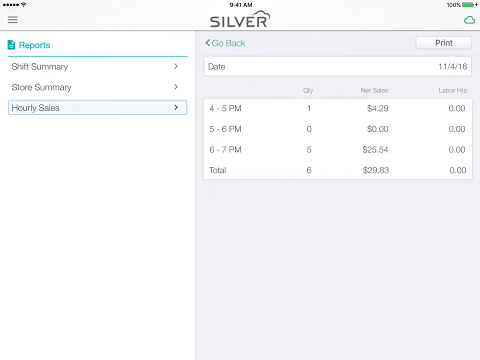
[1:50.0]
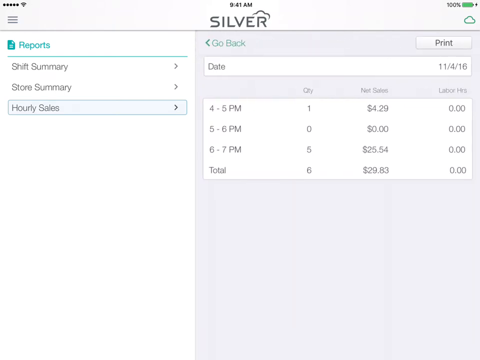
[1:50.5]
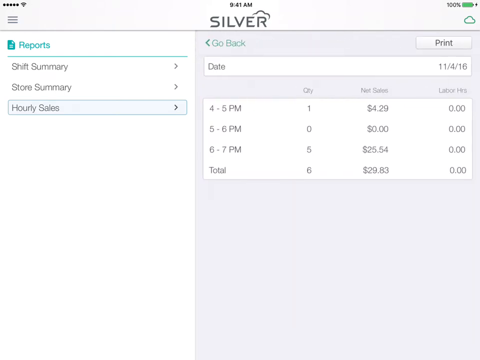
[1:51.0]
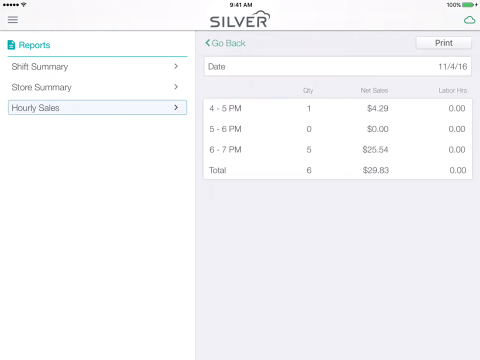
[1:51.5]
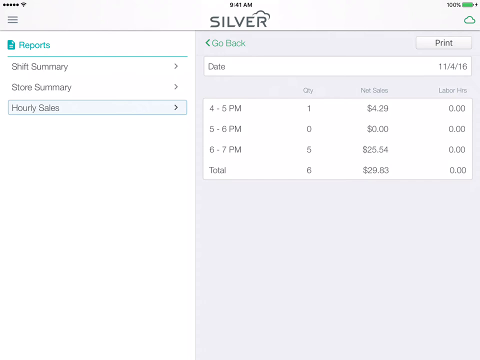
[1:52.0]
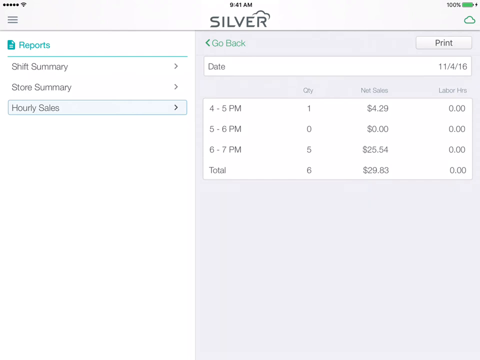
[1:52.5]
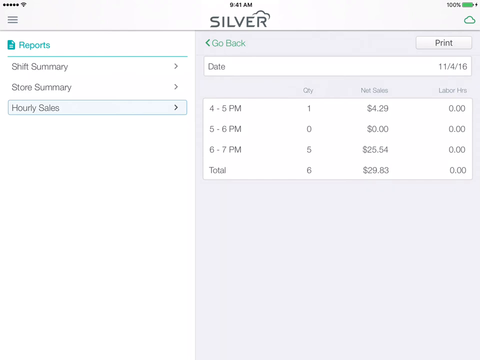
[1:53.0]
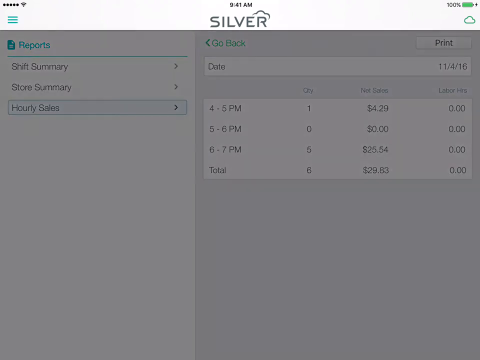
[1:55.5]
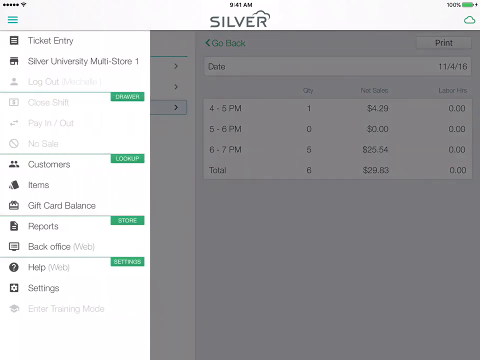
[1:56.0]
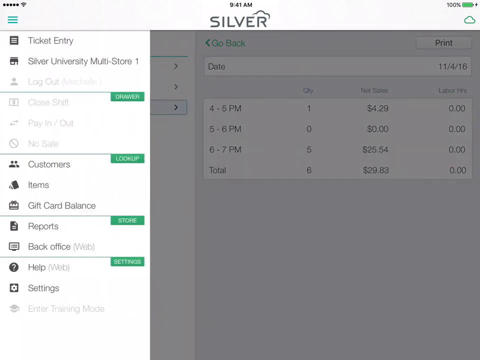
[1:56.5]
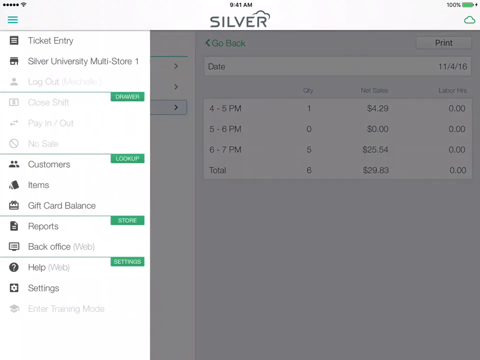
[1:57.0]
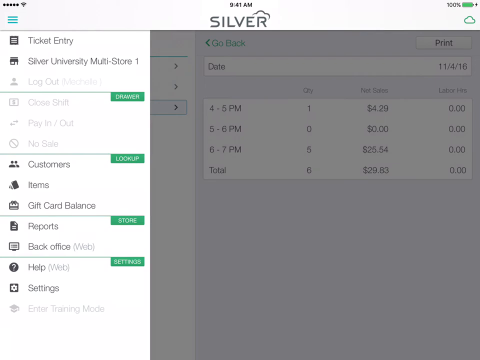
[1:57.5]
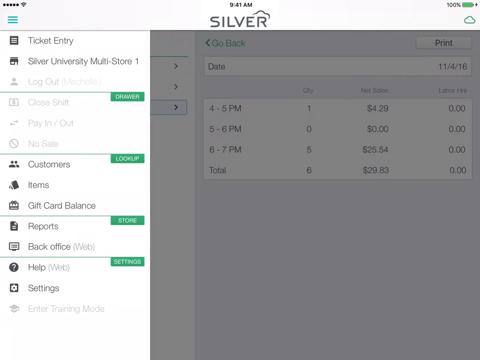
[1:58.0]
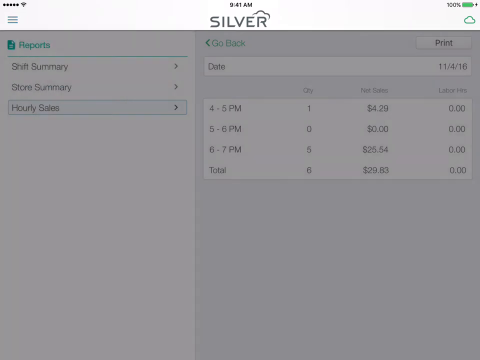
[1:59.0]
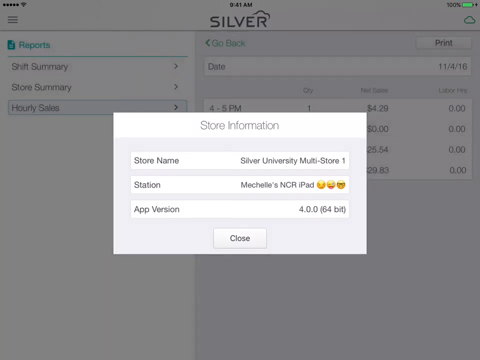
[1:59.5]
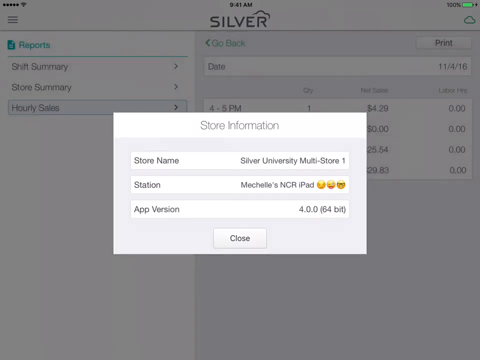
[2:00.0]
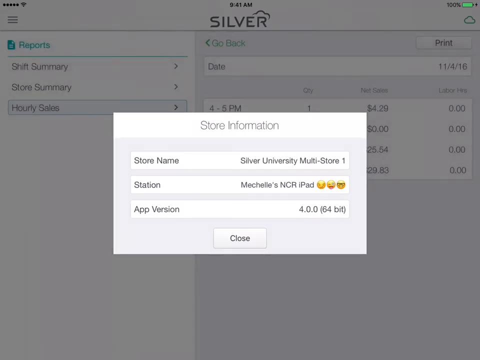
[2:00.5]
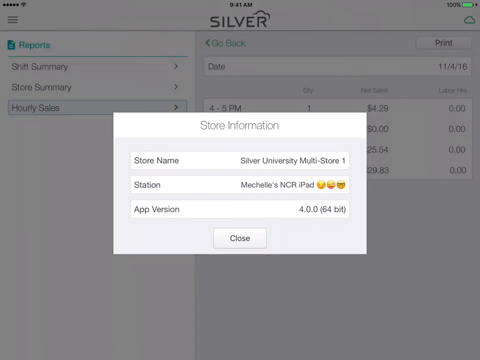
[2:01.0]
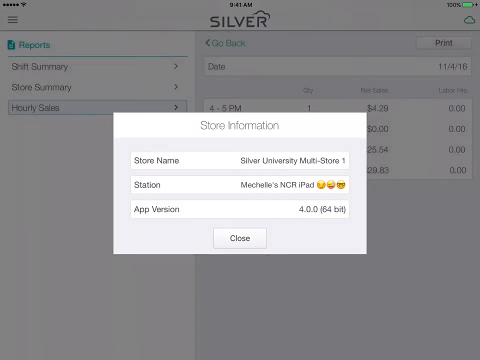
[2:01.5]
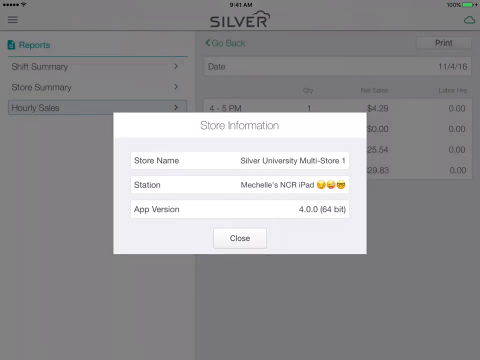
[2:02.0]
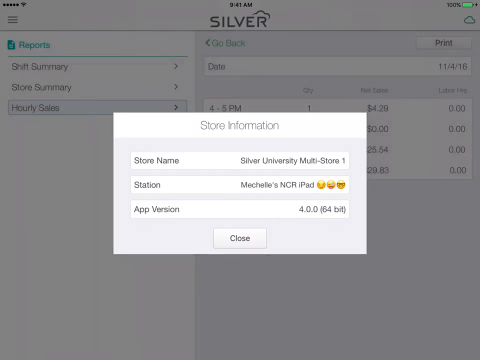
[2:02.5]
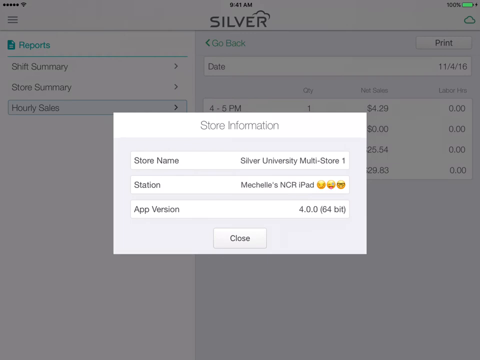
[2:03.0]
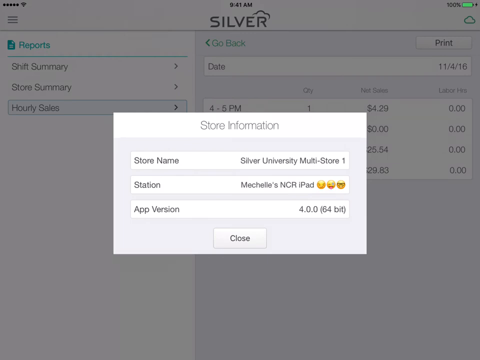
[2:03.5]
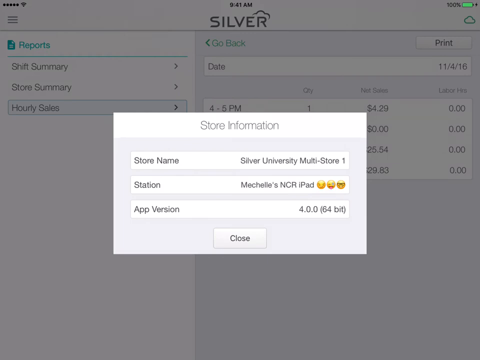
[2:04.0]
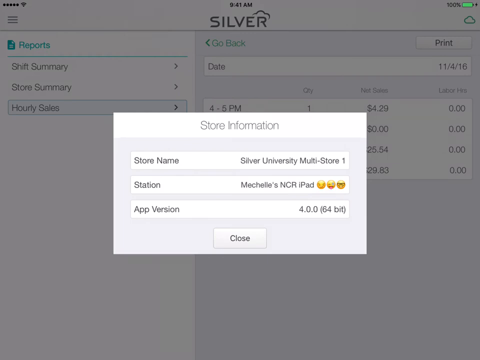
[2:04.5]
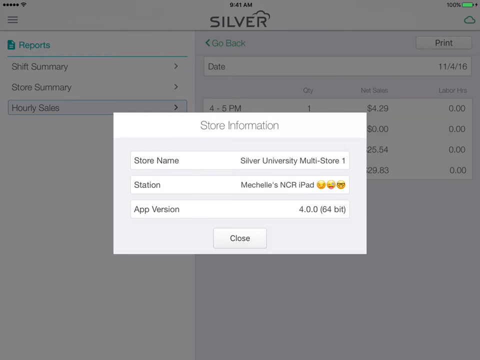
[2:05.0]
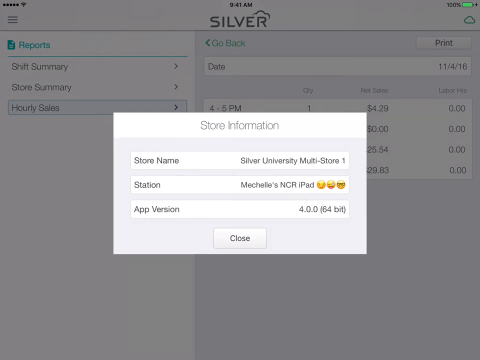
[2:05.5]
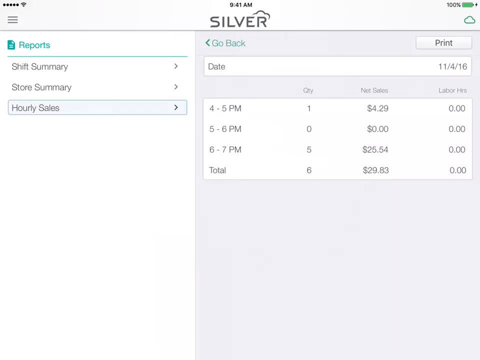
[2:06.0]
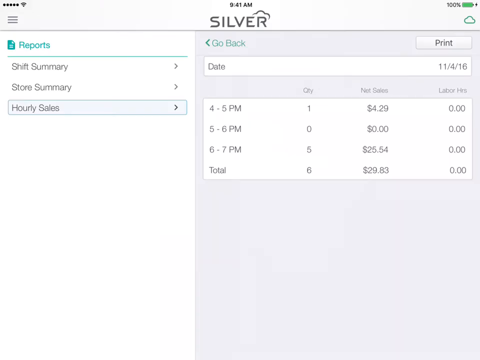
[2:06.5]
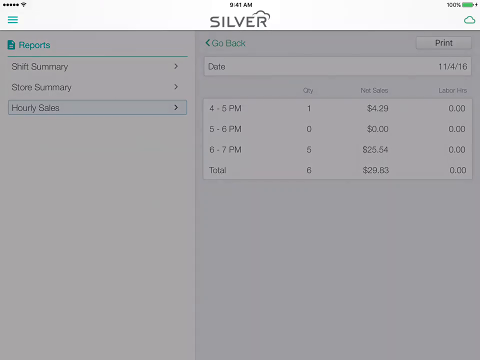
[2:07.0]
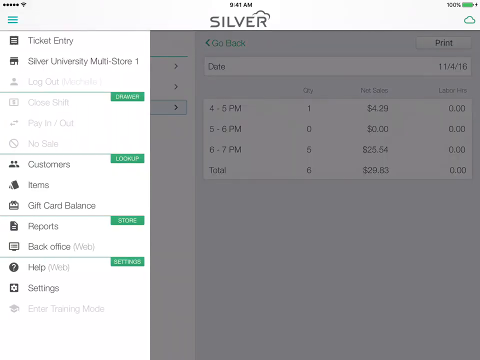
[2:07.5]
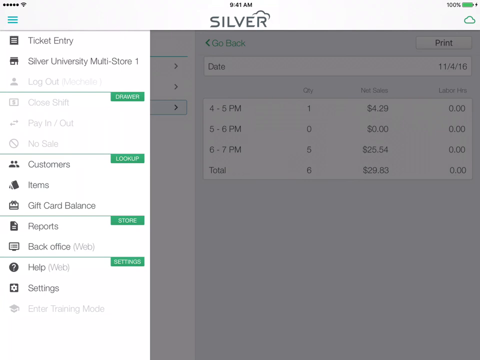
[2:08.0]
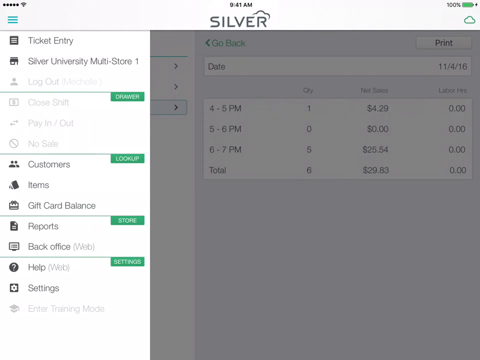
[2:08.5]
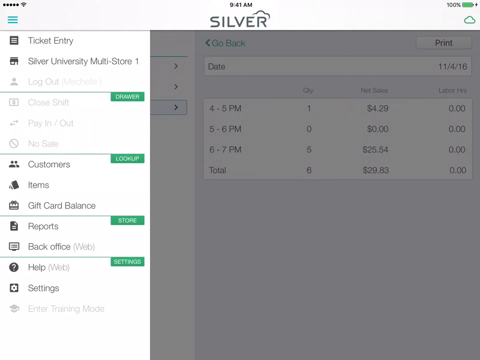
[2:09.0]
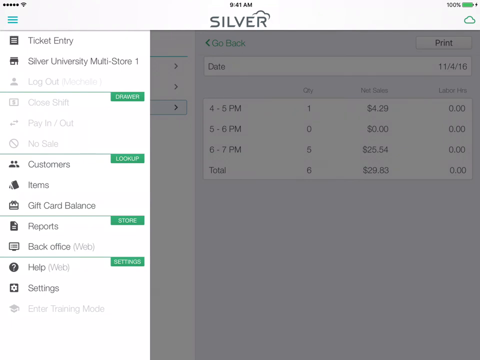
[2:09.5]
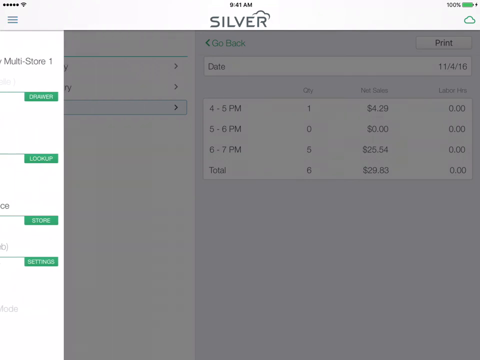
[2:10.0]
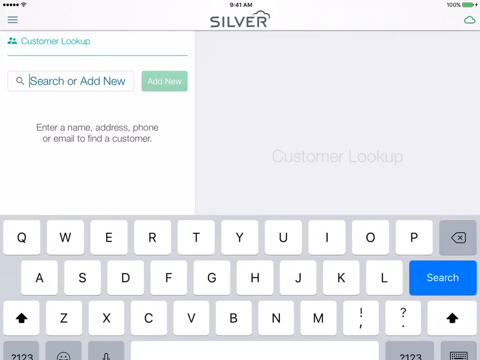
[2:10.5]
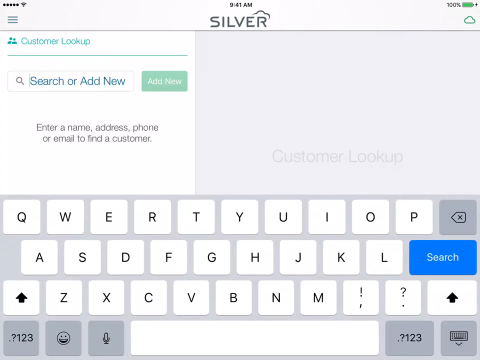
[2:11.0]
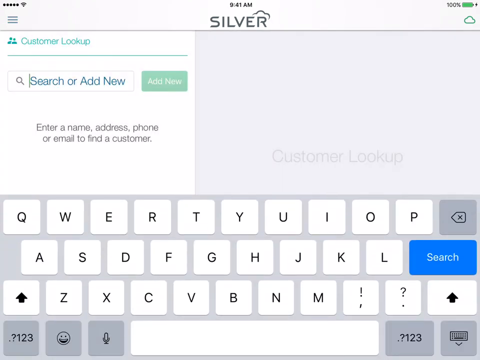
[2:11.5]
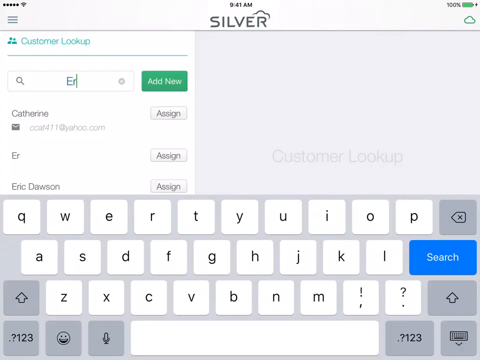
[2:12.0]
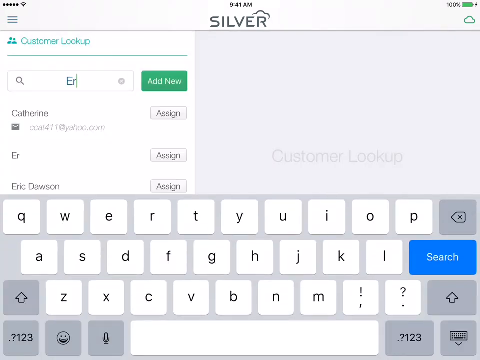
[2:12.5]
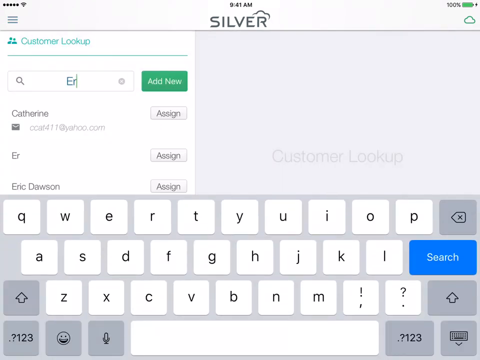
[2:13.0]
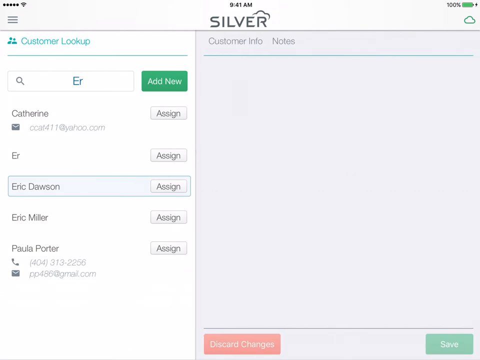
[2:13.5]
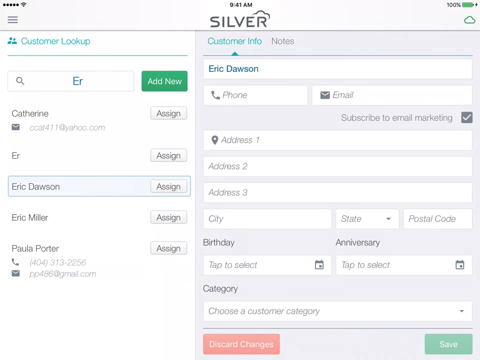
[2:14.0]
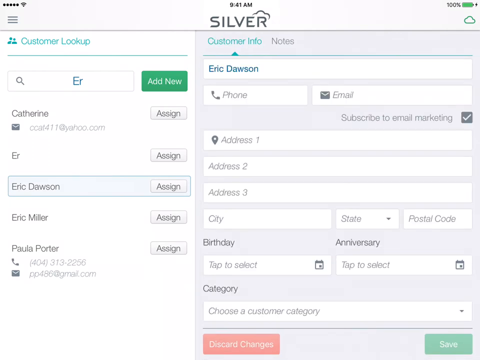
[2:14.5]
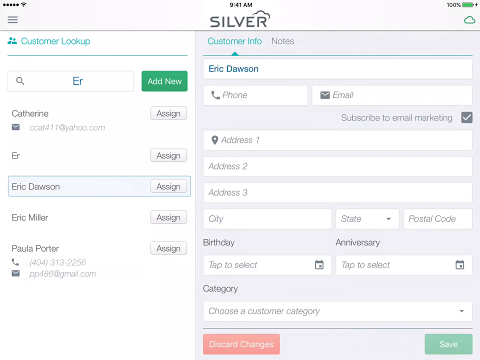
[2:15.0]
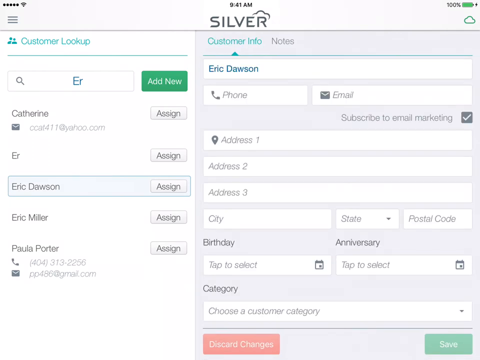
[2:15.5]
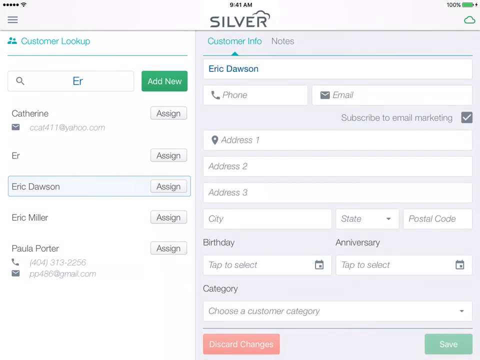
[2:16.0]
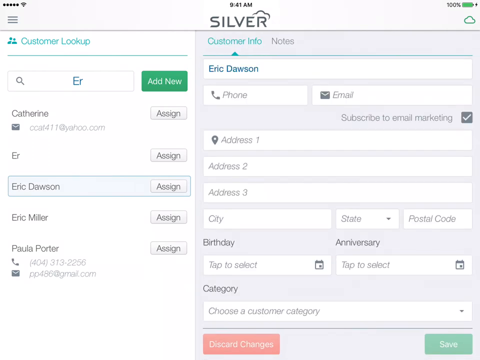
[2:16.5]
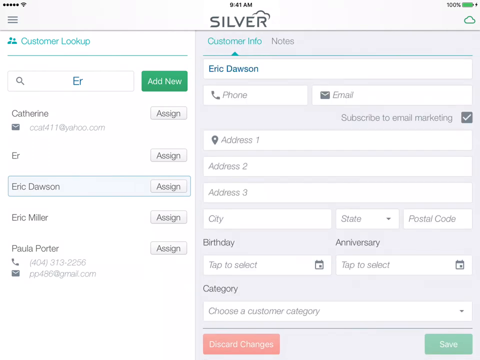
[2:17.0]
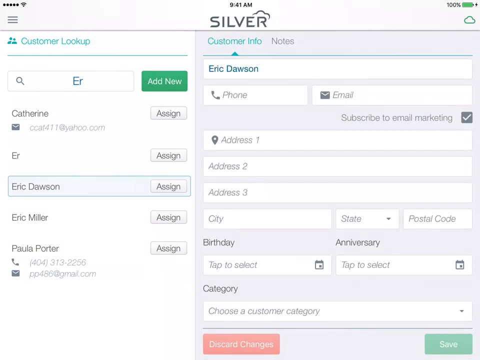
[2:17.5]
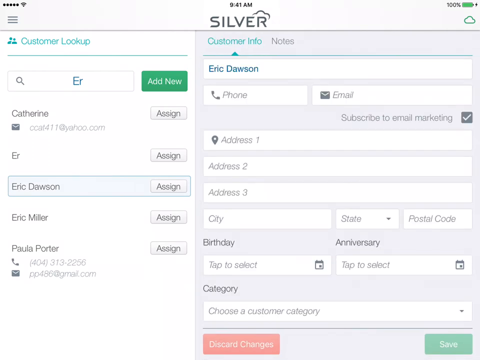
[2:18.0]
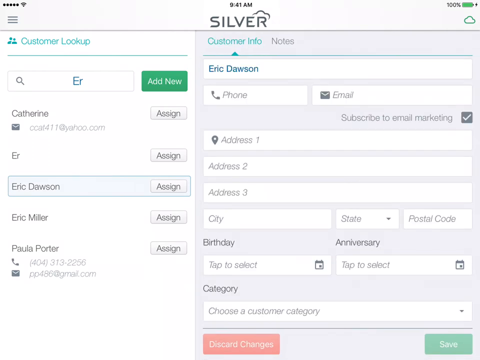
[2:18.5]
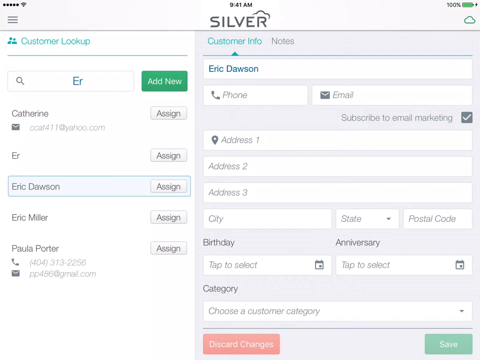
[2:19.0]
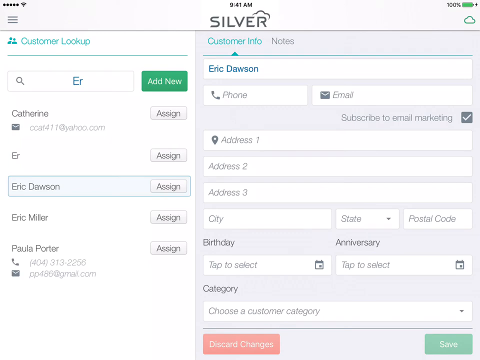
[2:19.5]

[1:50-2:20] The hourly sales screen under reports stays up for a few seconds. The user opens the menu again by clicking the three horizontal bars. It is not clear where they click next, but a second or so later the menu goes away and a pop-up window appears with the title "store information" at the top on a white field and a horizontal bar across the entire pop-up. Most of the pop-up is gray, with three white rectangles: store name, shown as Silver University Multi-Store 1; station, Mechelle's NCR iPad with some emojis; and app version, 4.0.0 (64-bit). There is a close button at the bottom of the pop-up, and after a few seconds the pop-up goes away, apparently closed by the user. They click the three-horizontal-bar menu at the top left again, bringing the menu in from the left, and appear to click customer lookup, which opens next. An on-screen keyboard comes up from the bottom, and in a search bar they type the letters ER, which brings up customer info for someone named Eric Dawson. None of the fields below, which include phone number, email and address, are filled out.